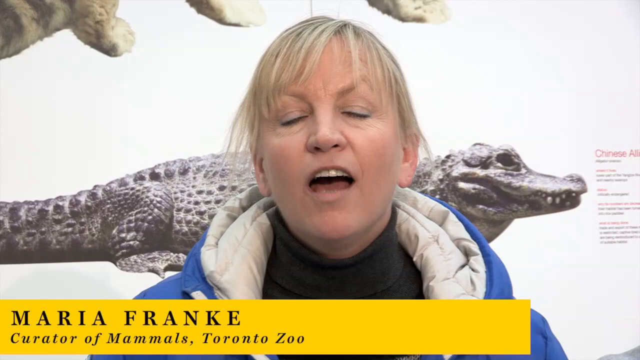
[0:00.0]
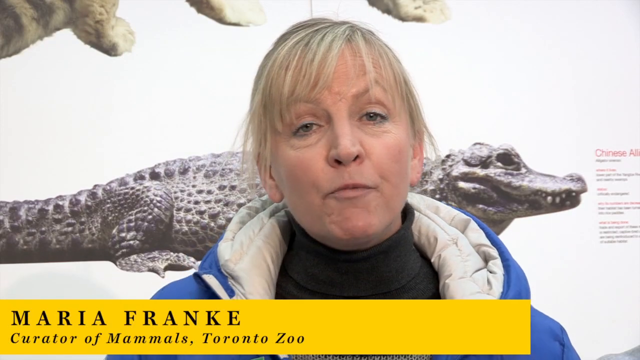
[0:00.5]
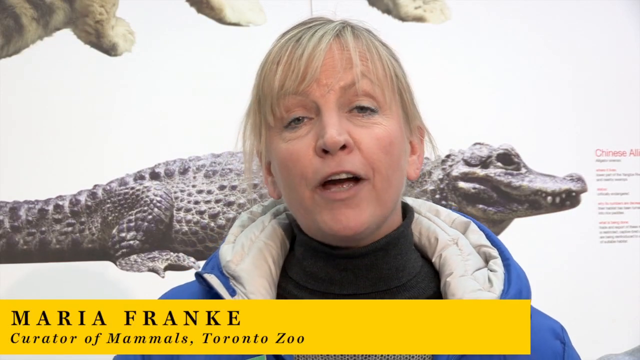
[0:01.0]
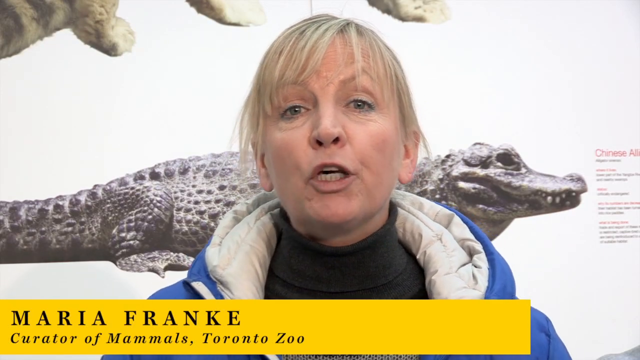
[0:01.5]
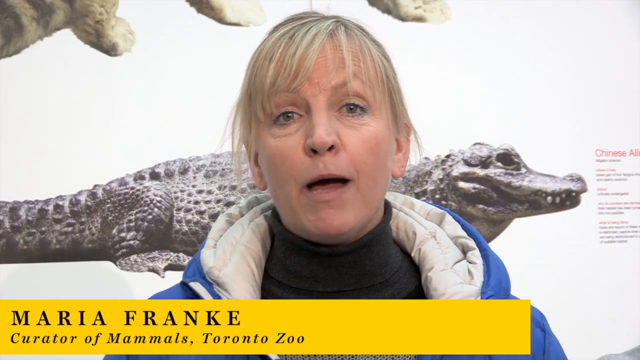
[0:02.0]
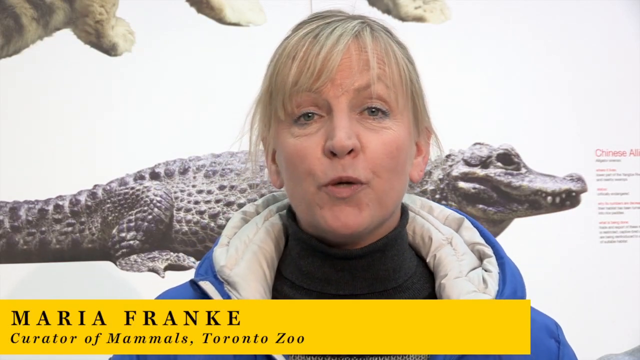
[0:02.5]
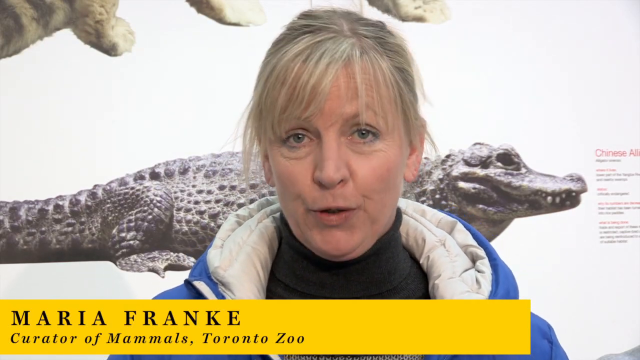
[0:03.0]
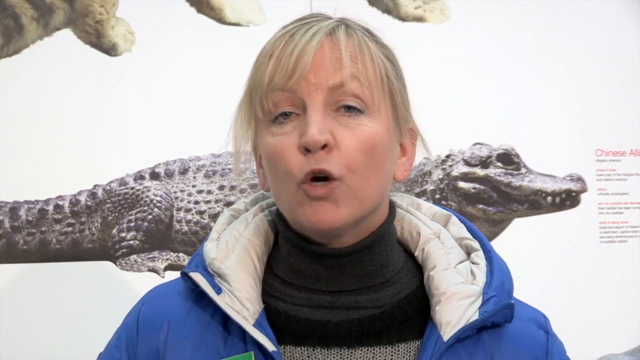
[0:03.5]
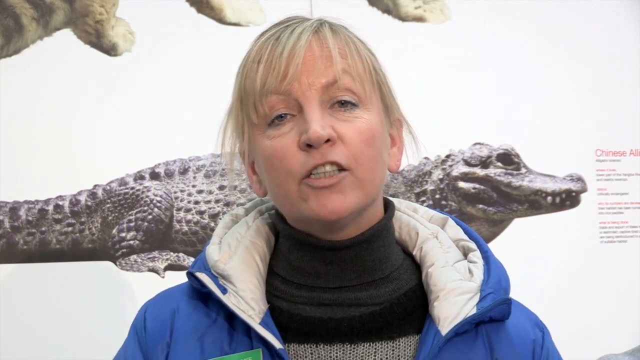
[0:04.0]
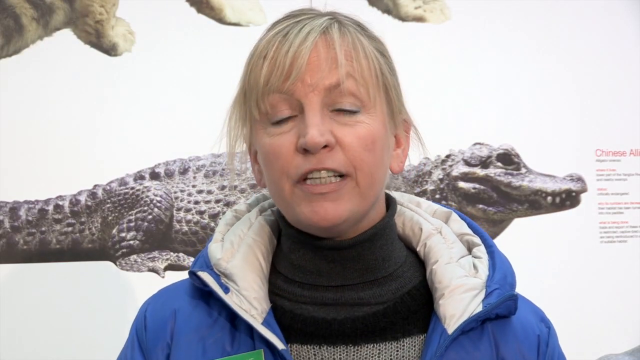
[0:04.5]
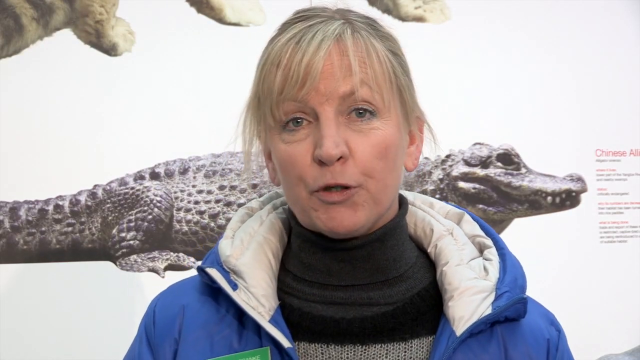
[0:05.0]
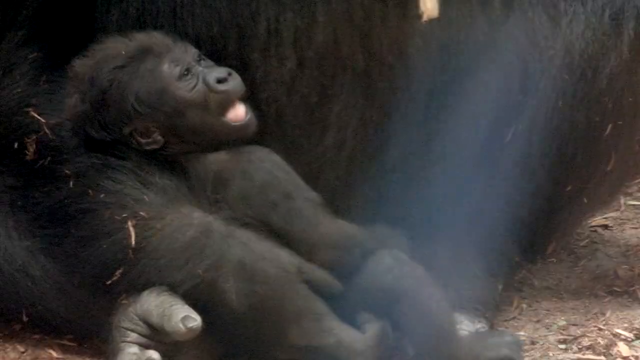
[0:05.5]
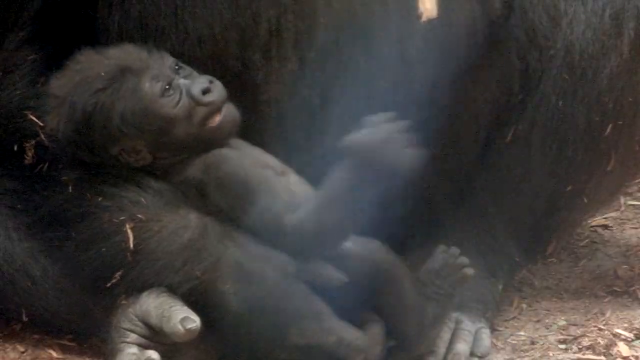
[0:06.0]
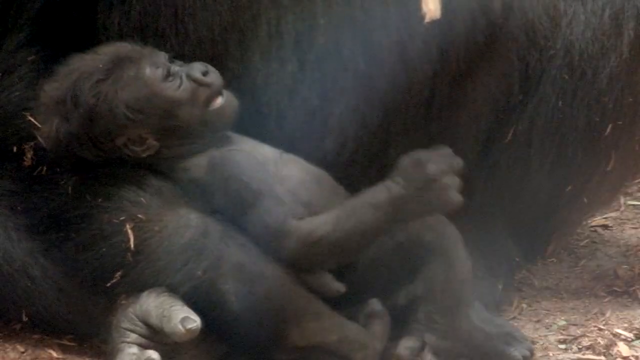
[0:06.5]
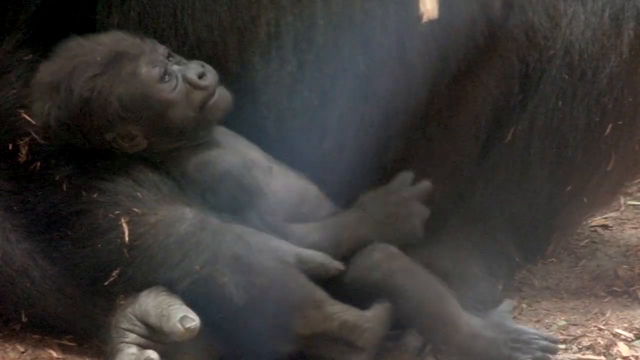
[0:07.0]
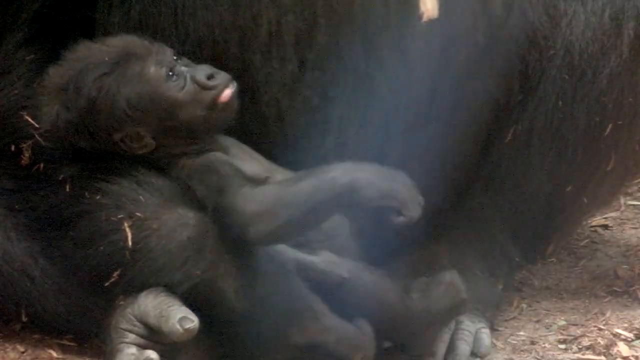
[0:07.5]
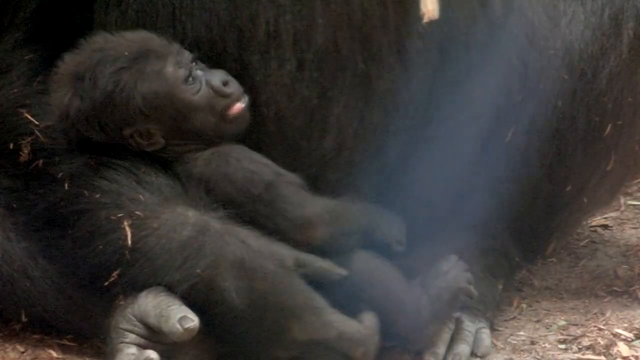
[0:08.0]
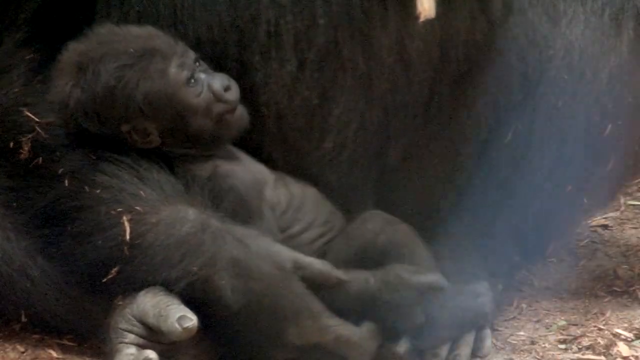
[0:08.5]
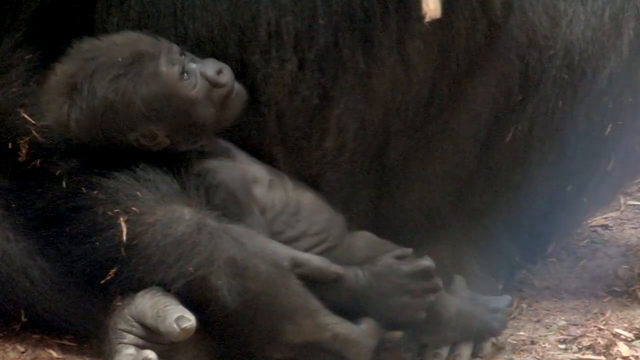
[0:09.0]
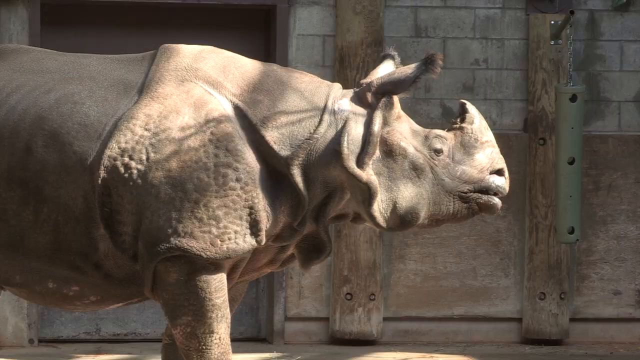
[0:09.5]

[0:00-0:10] A Caucasian woman appears with some sort of caiman, or a crocodile/alligator, visible behind her. She is an older woman, probably around 40, wearing a blue jacket and a black, kind of undershirt. She is Maria Frankie, the curator of mammals at the Toronto Zoo in Canada. The video then transitions to a baby gorilla being held by its mother, and then to a large rhino.